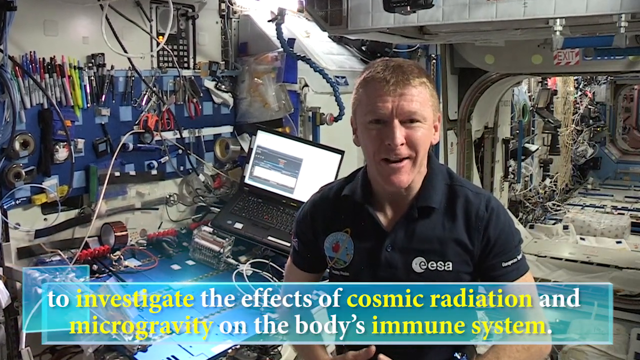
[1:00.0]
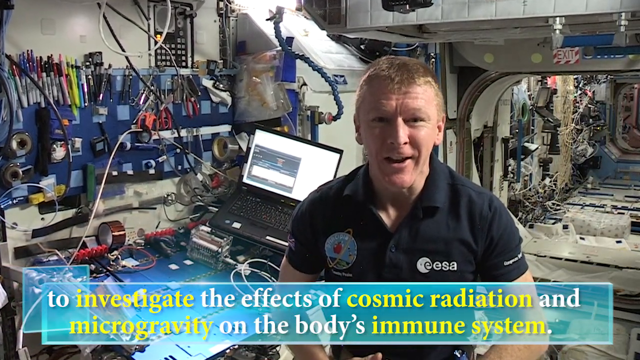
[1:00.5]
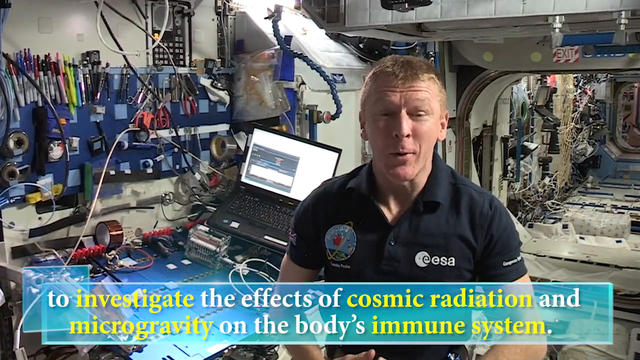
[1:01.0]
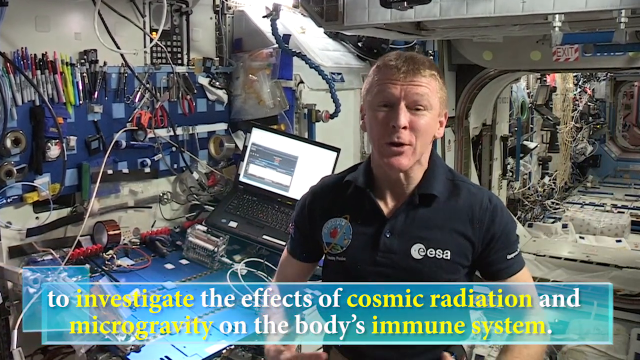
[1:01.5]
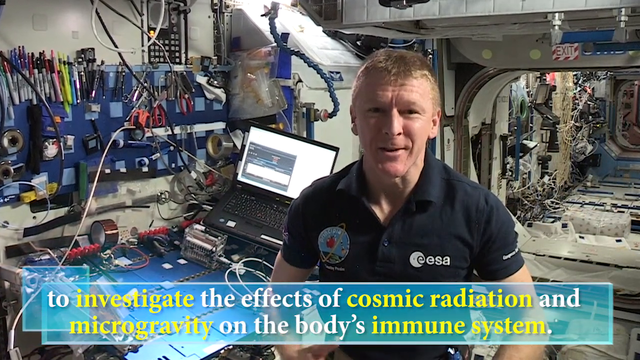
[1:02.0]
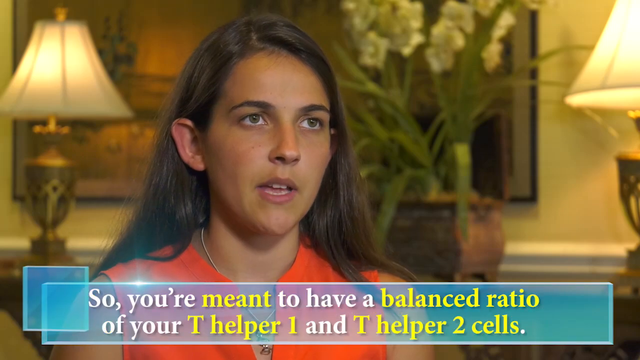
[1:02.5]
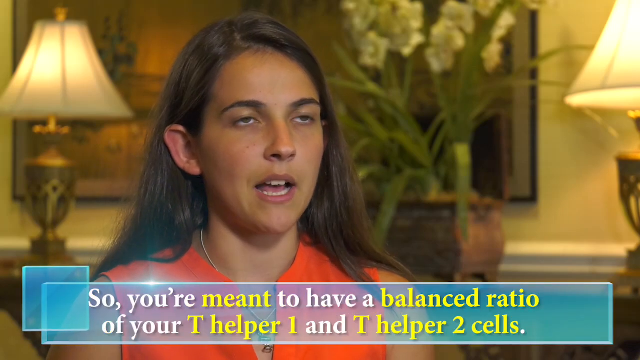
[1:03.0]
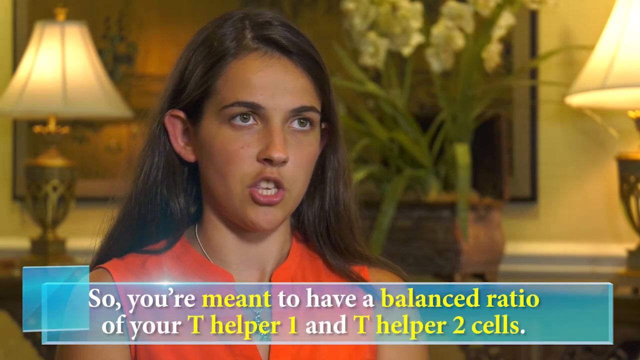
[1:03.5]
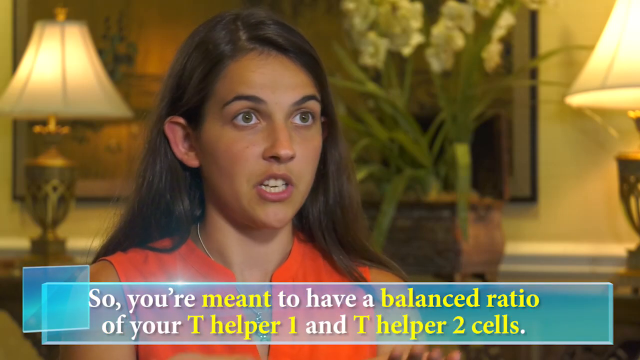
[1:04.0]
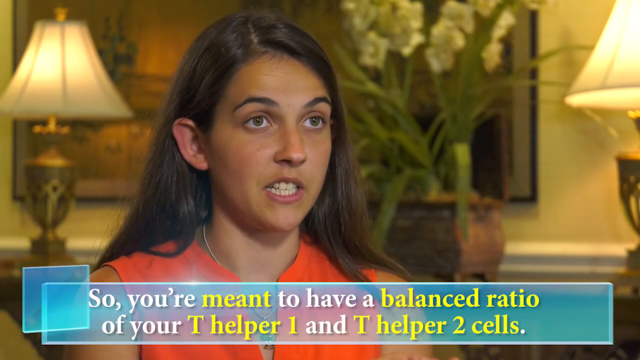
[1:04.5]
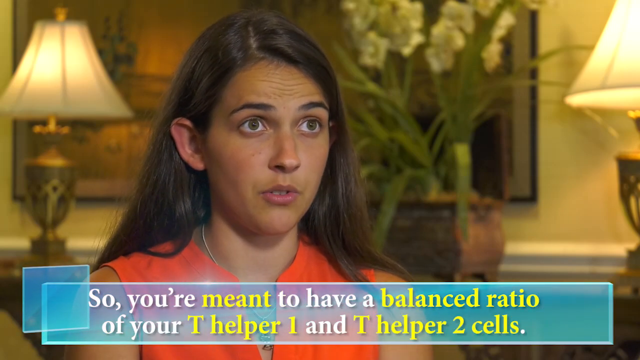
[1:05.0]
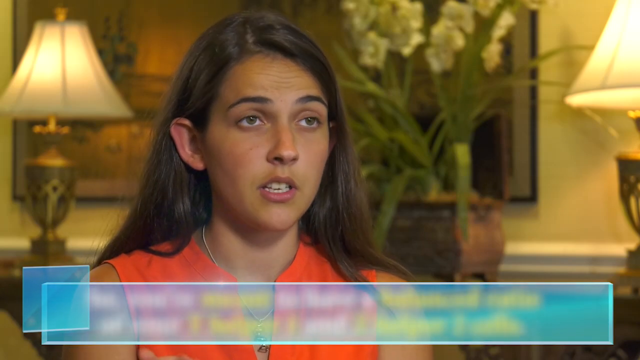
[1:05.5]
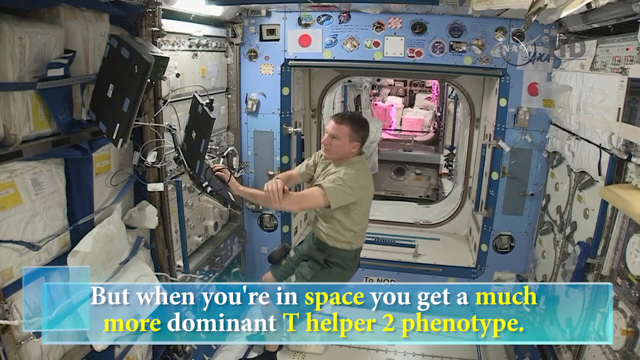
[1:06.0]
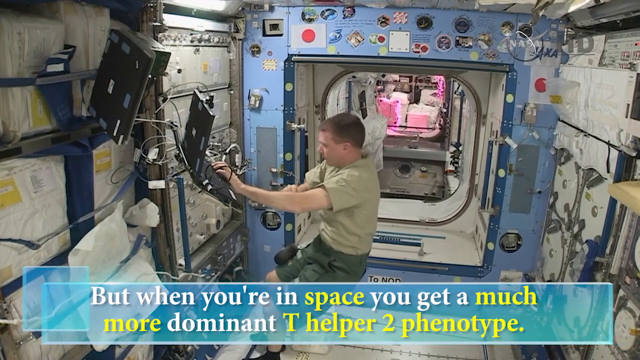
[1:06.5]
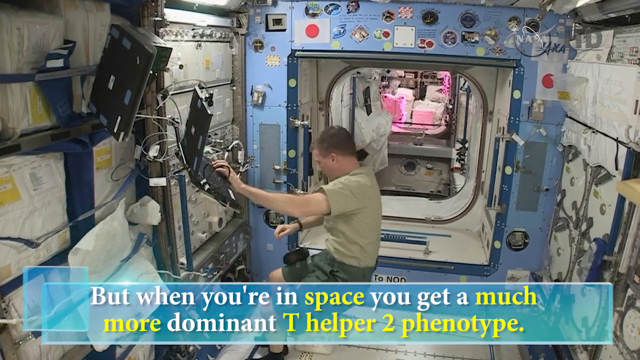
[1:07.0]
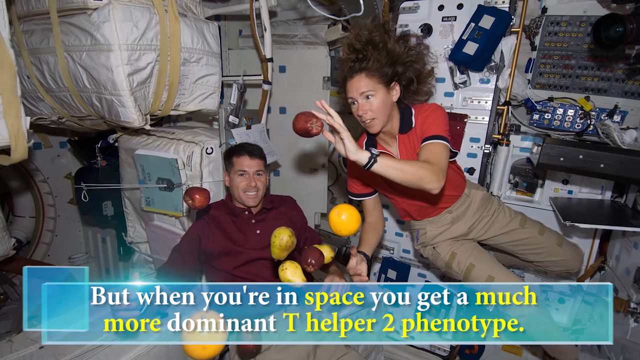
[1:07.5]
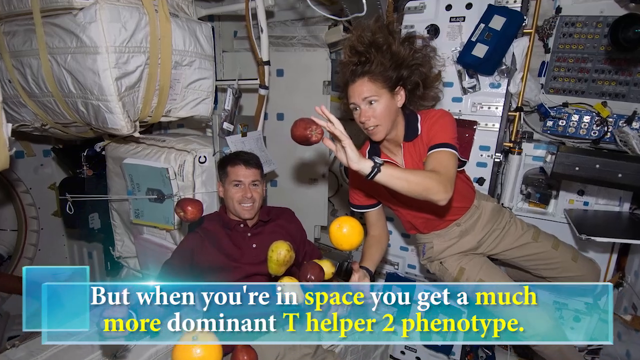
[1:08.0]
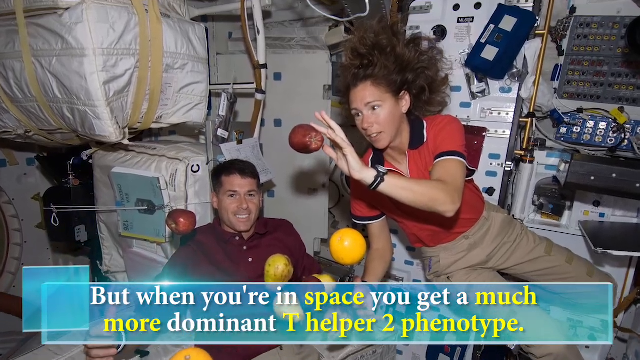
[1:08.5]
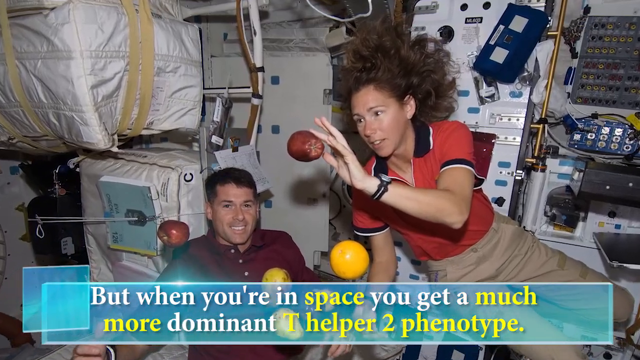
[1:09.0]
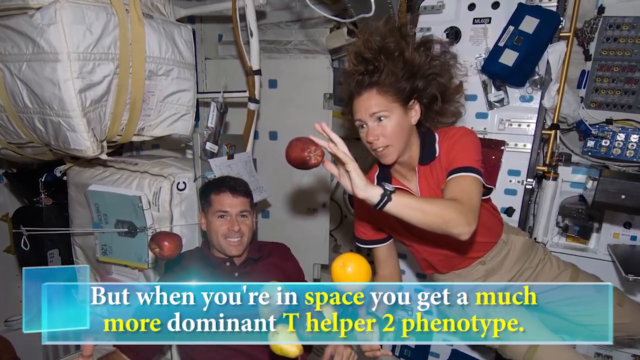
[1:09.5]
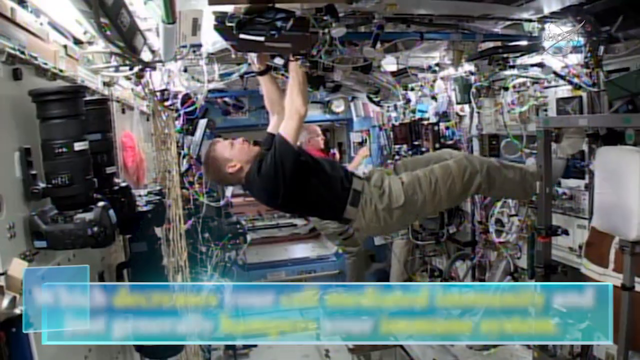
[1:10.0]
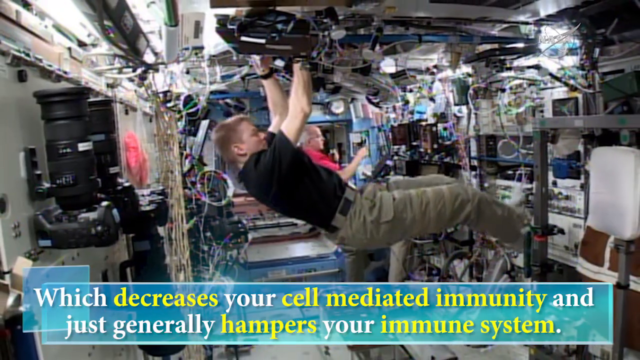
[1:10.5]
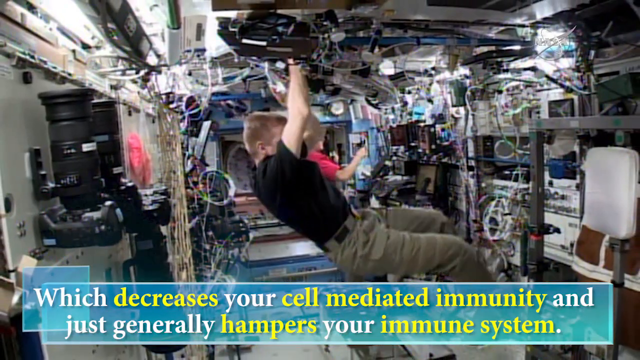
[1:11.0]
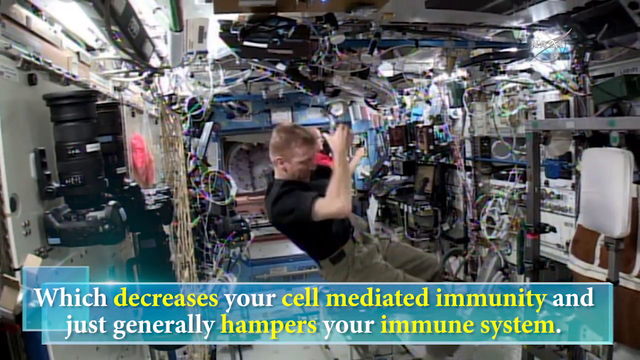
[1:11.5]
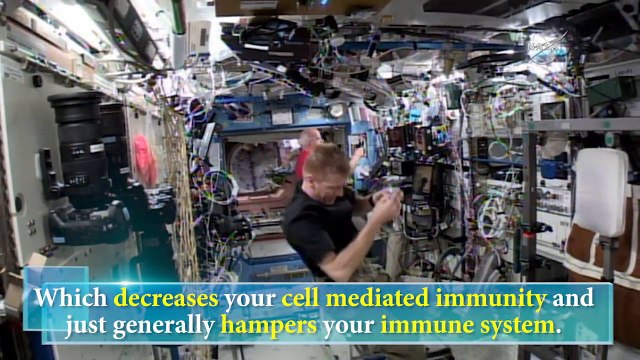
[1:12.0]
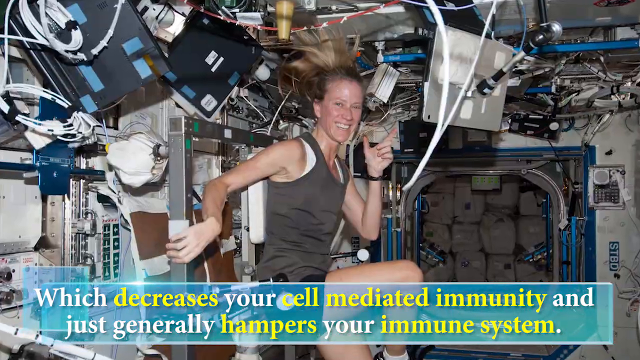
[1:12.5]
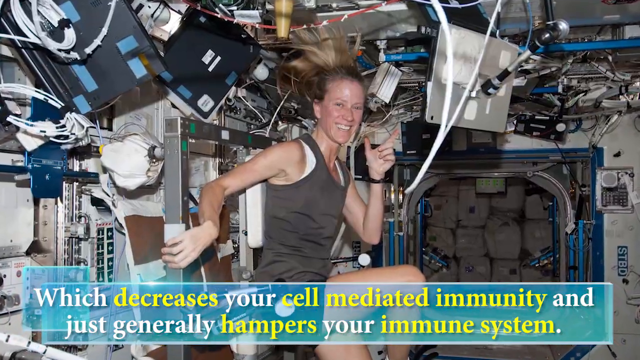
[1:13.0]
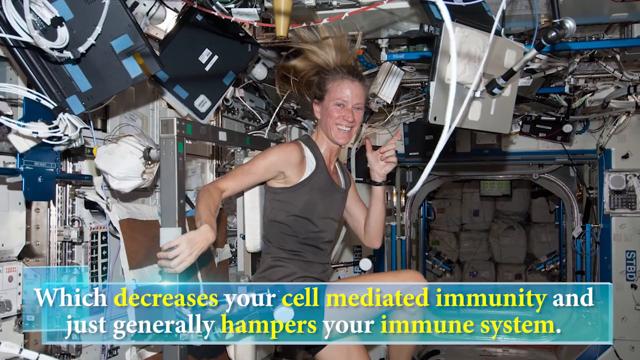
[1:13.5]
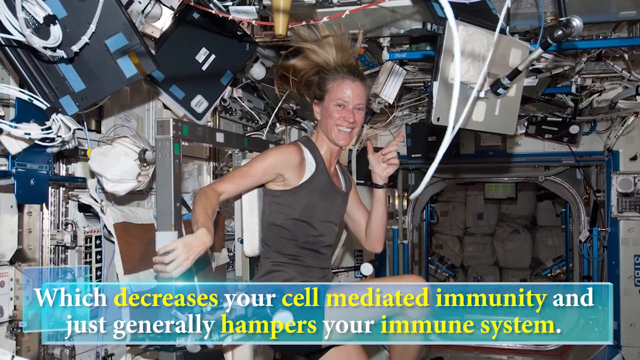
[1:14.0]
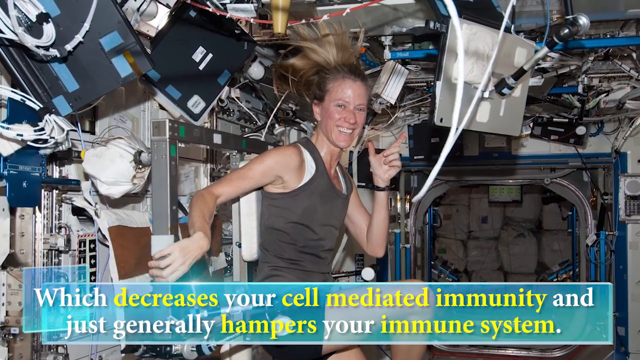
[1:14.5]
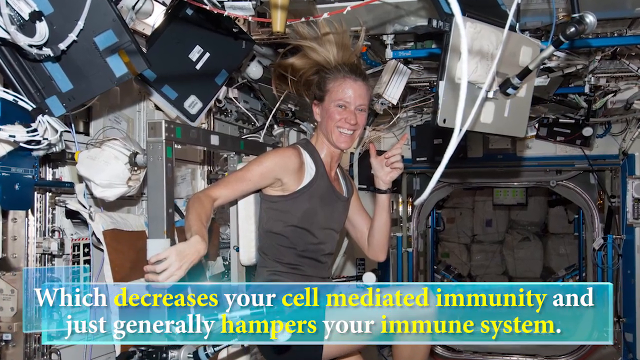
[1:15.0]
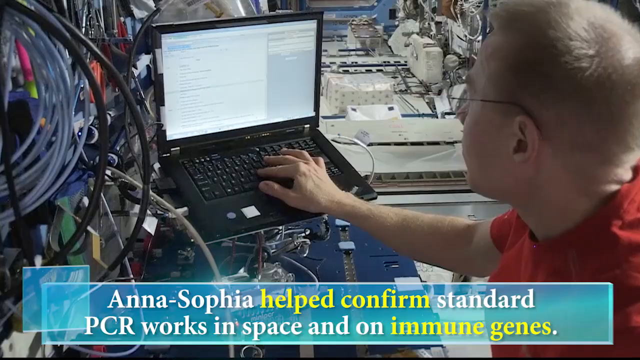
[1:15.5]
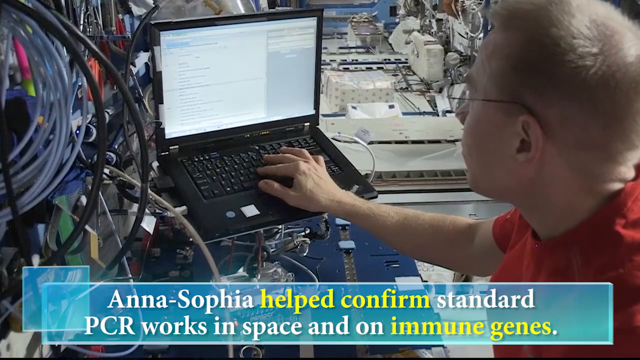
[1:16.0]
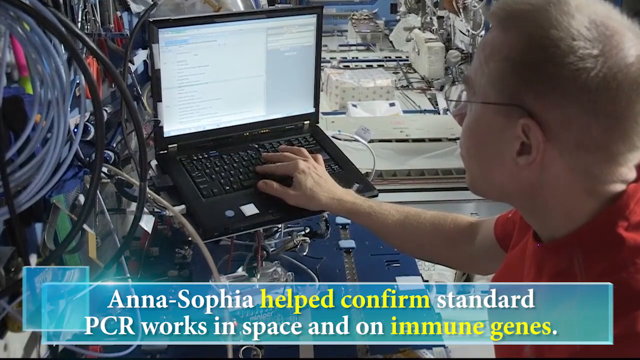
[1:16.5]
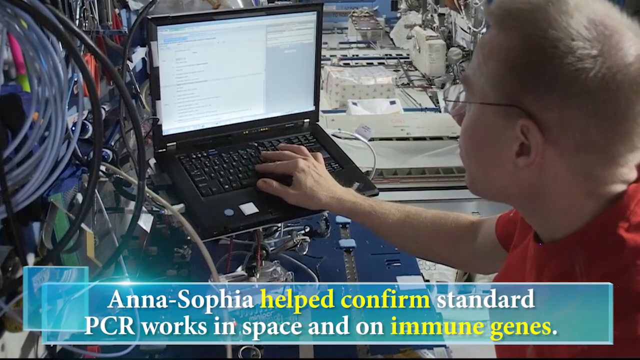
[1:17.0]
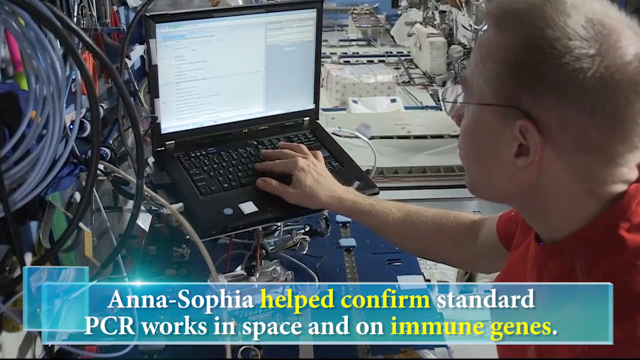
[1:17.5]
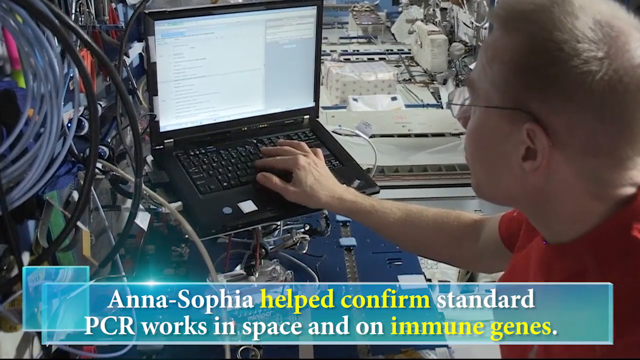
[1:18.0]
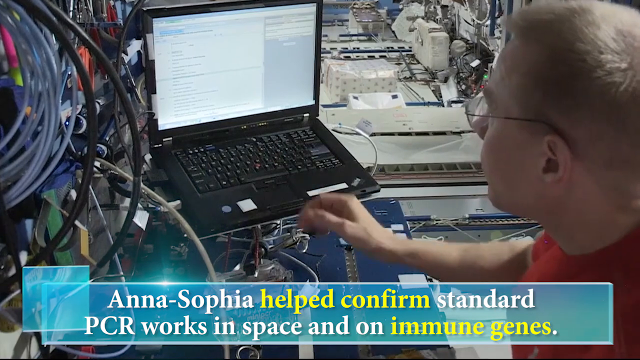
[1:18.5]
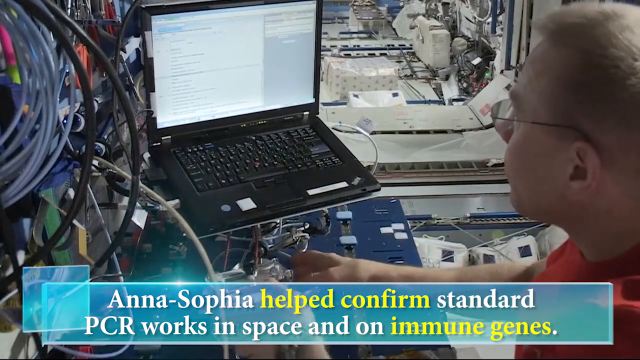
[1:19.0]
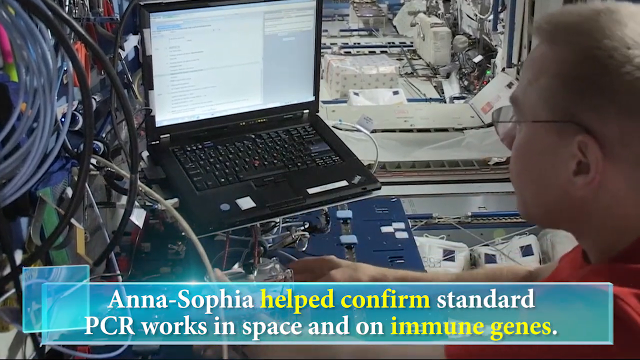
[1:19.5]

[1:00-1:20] A man is in a kind of space shuttle or something similar, with a computer kind of slanted and a lot of other technical equipment around him and an exit sign to the right. A blue banner at the bottom has white and yellow text reading "to investigate the effects of cosmic radiation and microgravity on the body's immune system." He looks at the camera and talks before the video transitions to a woman with long brown hair, with text about having a balance ratio of T helper one and T helper two cells that continues "but when you're in space you get a much more dominant t helper two phenotype." A man at a computer is kind of floating, then a picture shows a woman and a man floating along with a bunch of floating fruits, as the camera kind of zooms in a bit. More white and yellow text reads "which decreases your cell mediated immunity and just generally hampers your immune system." A man comes from the top, floating downwards, and a picture shows a smiling woman whose hair is kind of fluffed out. A man sits at a computer with white and yellow text reading "Anasophia helped confirm standard PCR works in space and on immune genes." He takes his hand off the keyboard and begins touching the PCR device at the bottom.